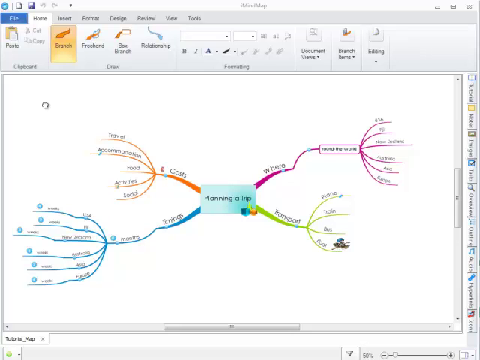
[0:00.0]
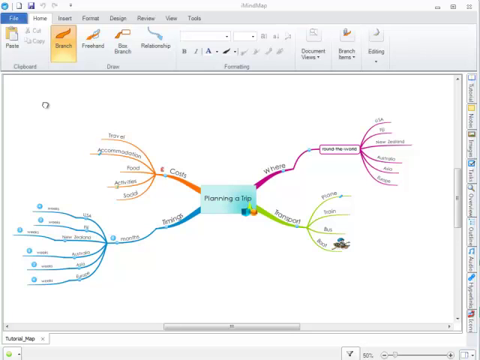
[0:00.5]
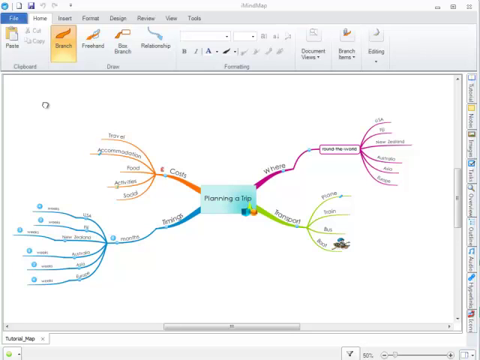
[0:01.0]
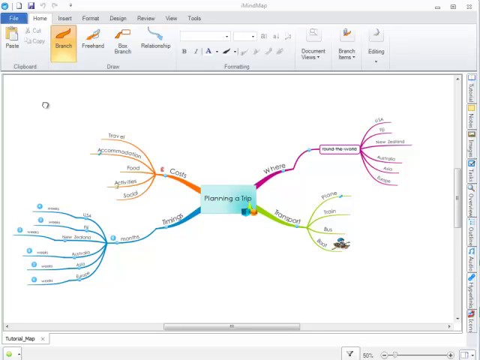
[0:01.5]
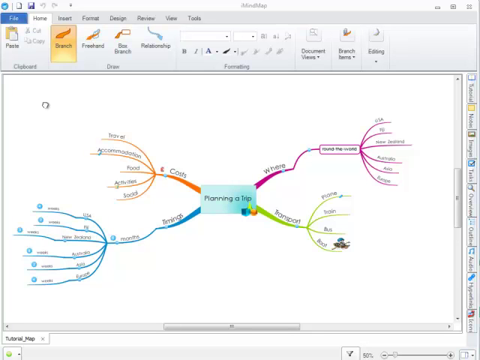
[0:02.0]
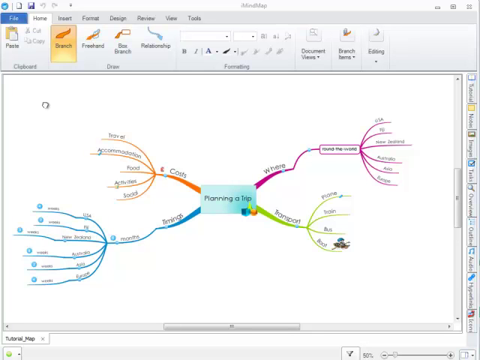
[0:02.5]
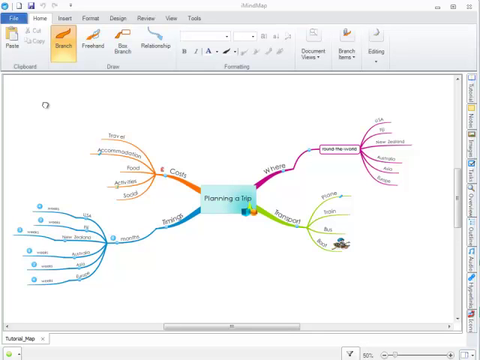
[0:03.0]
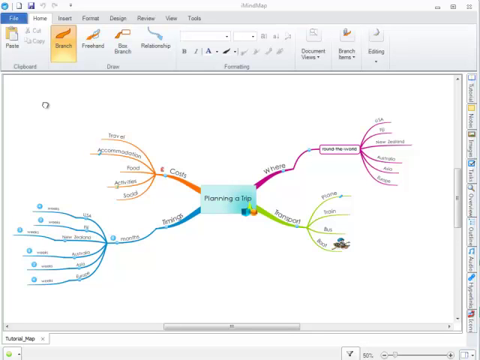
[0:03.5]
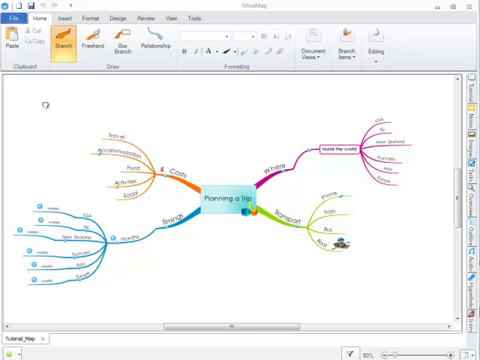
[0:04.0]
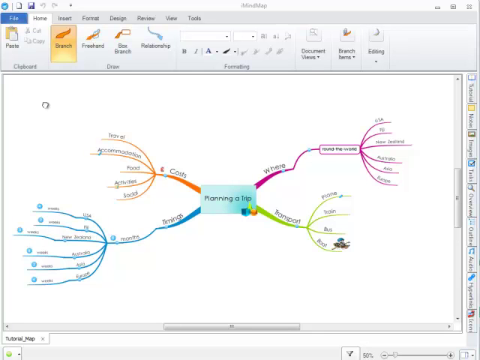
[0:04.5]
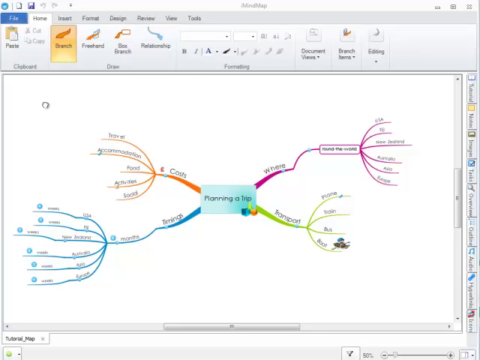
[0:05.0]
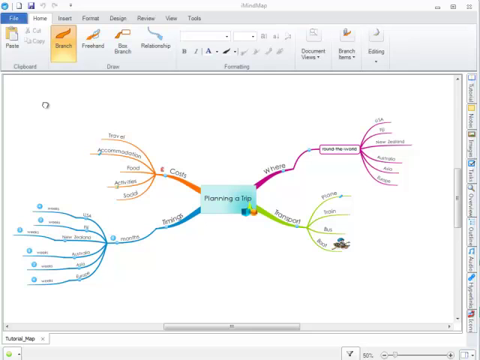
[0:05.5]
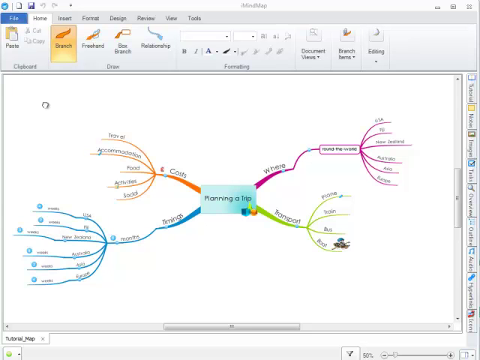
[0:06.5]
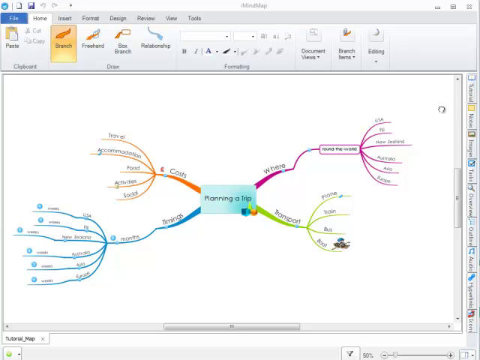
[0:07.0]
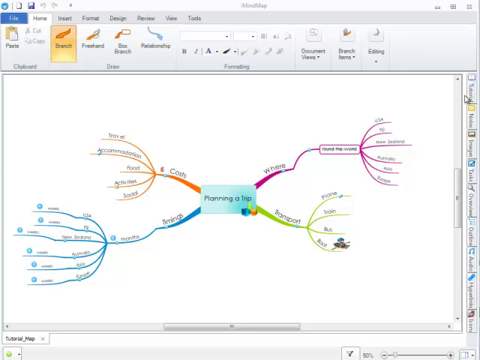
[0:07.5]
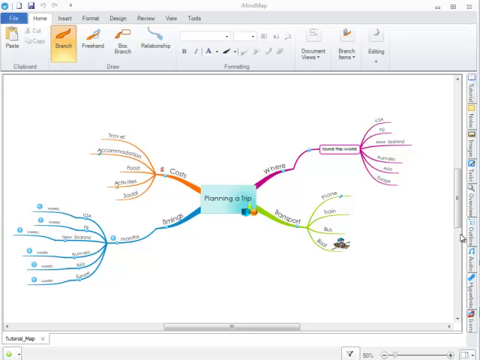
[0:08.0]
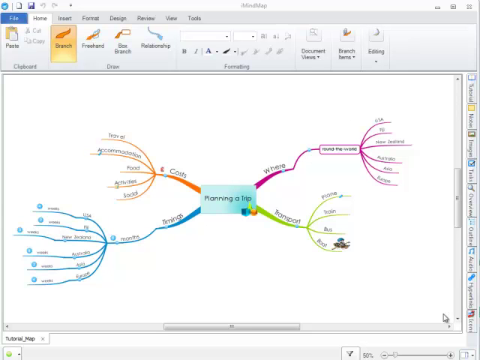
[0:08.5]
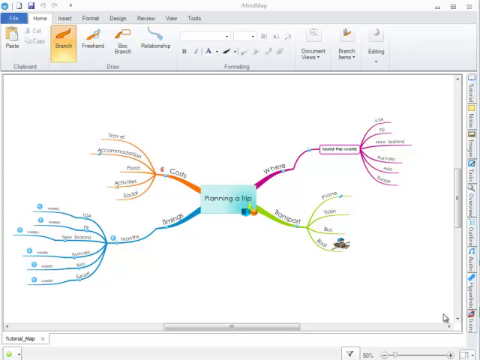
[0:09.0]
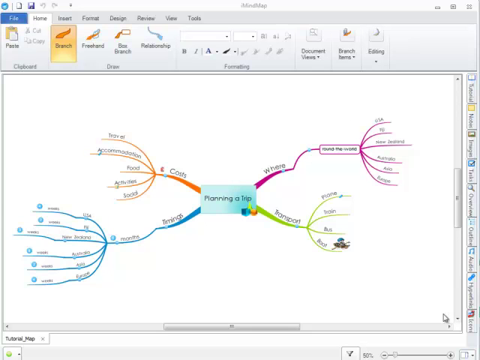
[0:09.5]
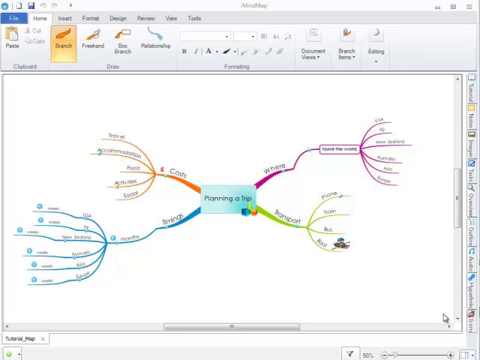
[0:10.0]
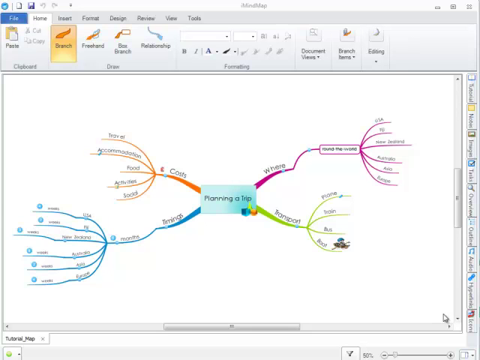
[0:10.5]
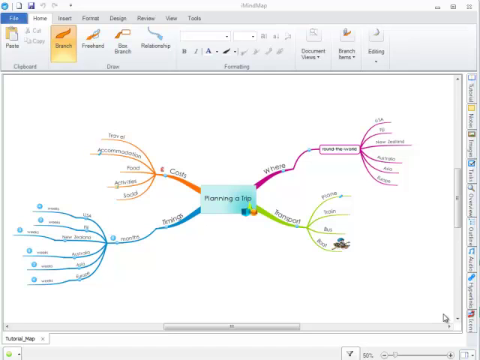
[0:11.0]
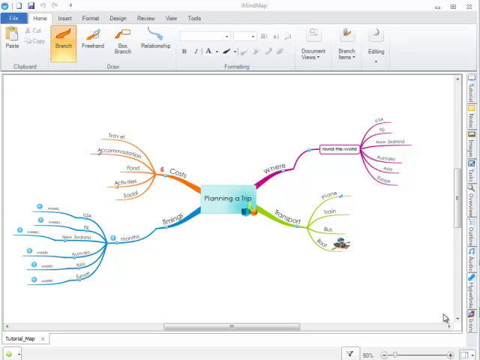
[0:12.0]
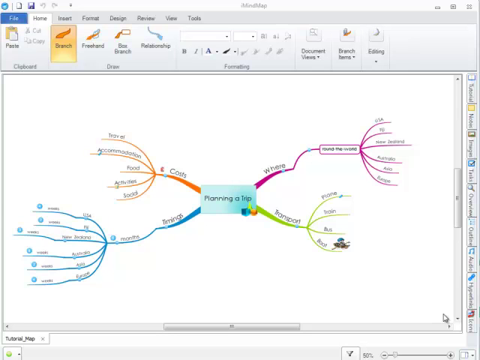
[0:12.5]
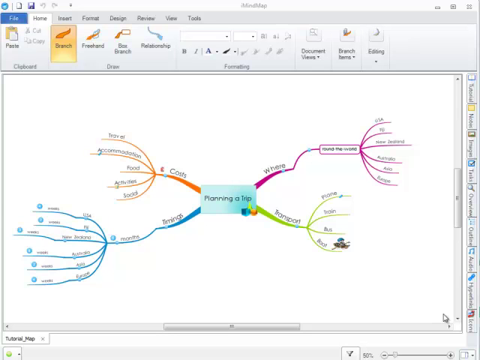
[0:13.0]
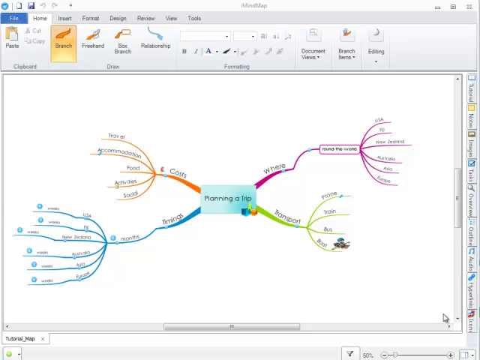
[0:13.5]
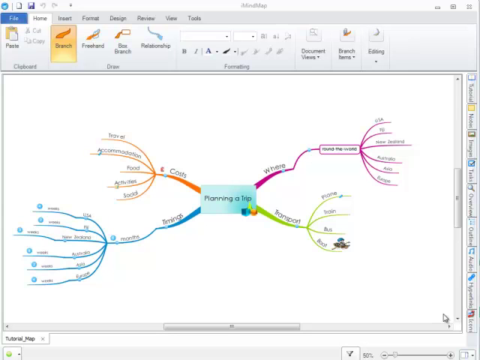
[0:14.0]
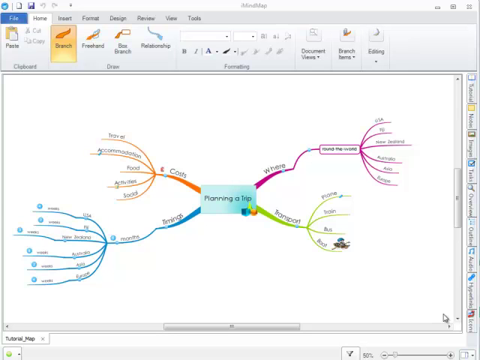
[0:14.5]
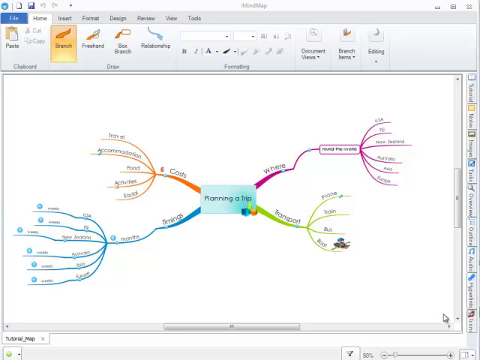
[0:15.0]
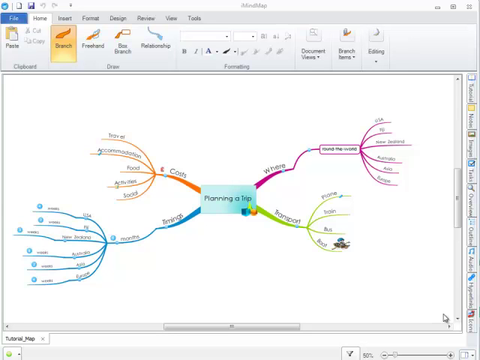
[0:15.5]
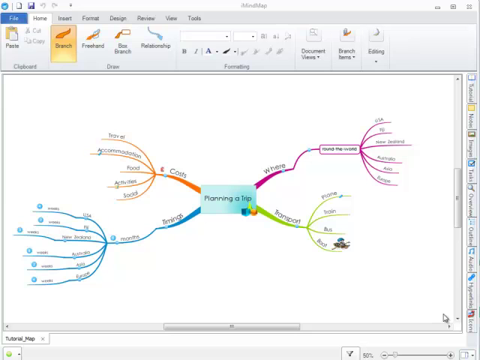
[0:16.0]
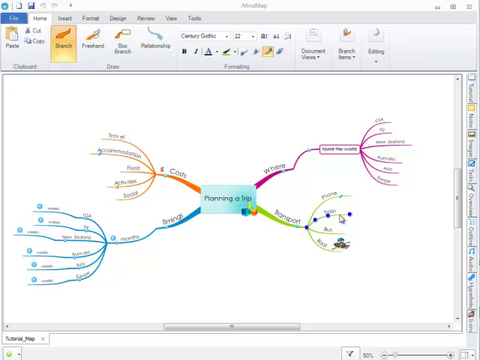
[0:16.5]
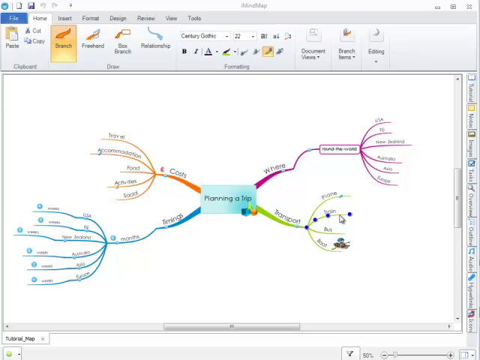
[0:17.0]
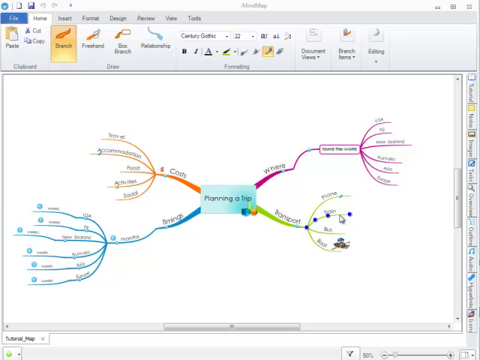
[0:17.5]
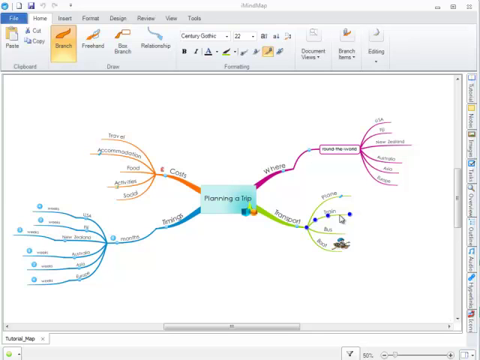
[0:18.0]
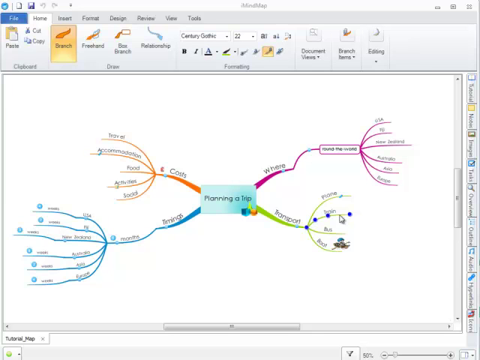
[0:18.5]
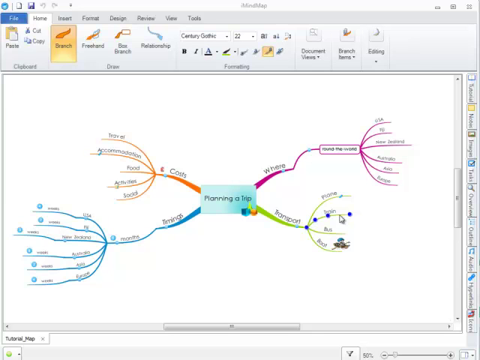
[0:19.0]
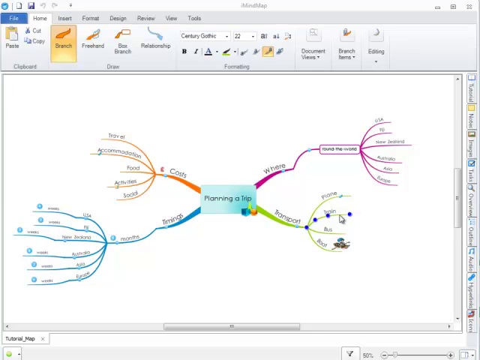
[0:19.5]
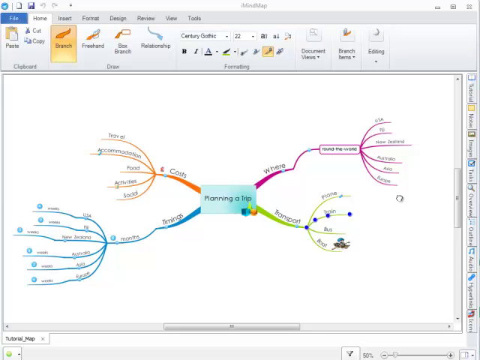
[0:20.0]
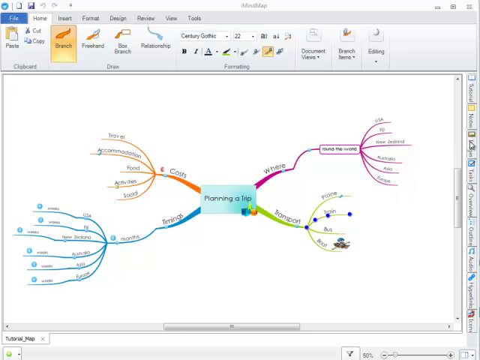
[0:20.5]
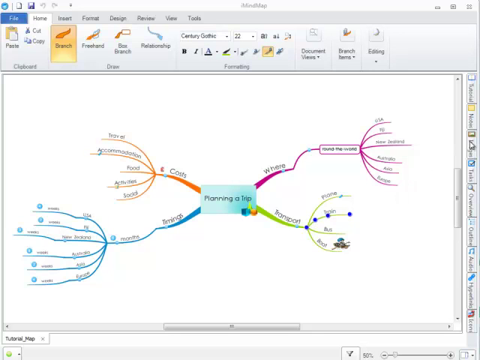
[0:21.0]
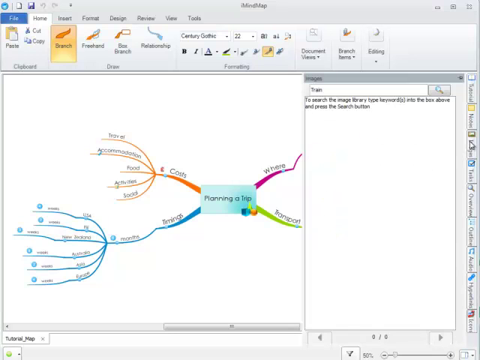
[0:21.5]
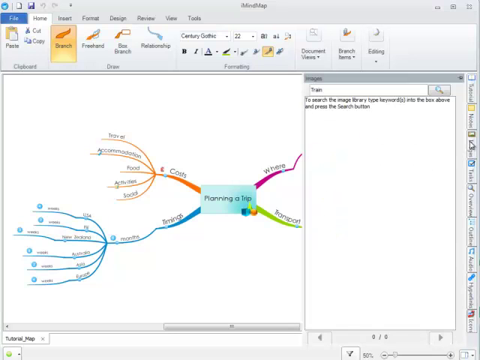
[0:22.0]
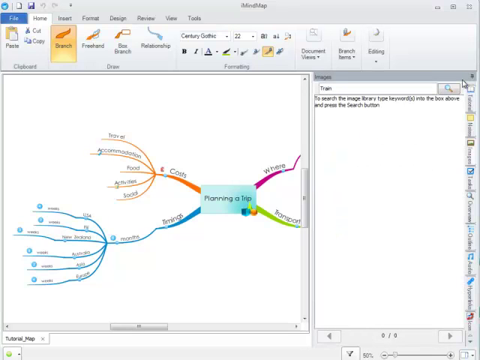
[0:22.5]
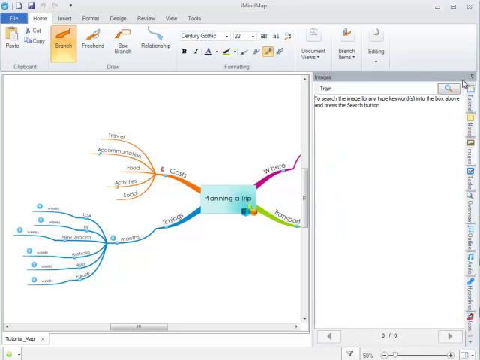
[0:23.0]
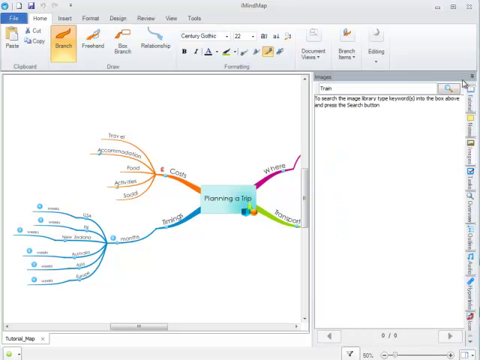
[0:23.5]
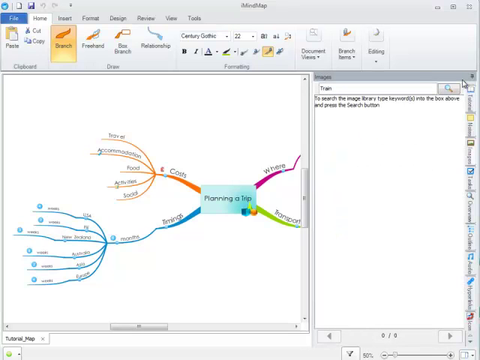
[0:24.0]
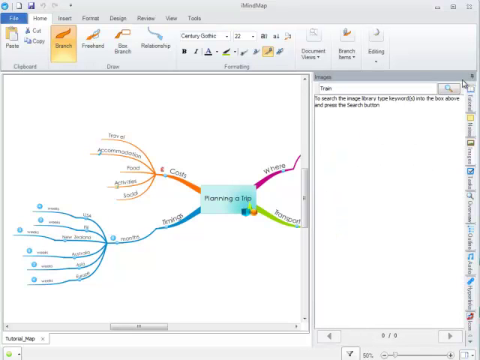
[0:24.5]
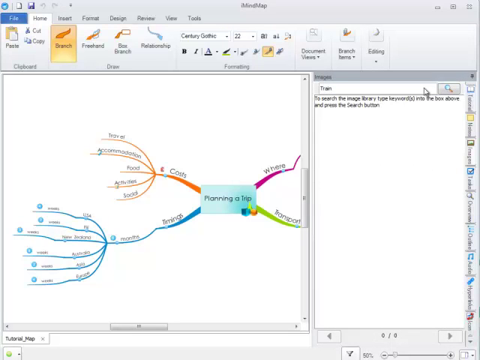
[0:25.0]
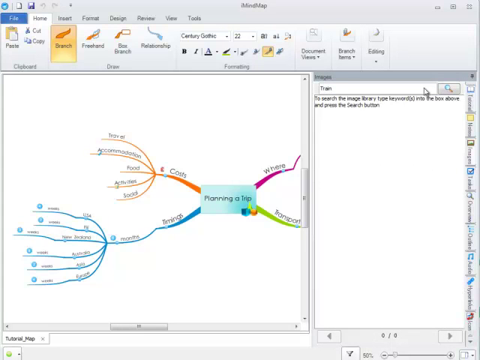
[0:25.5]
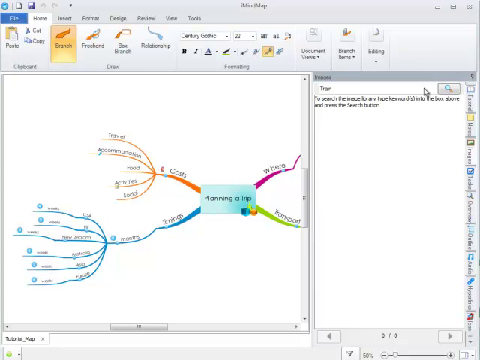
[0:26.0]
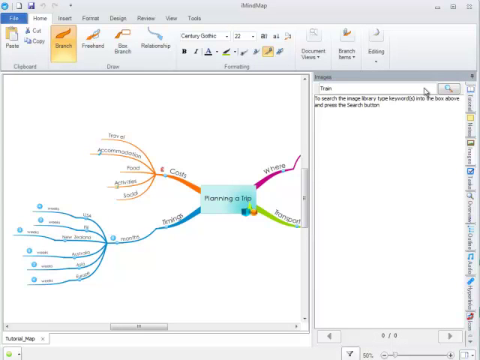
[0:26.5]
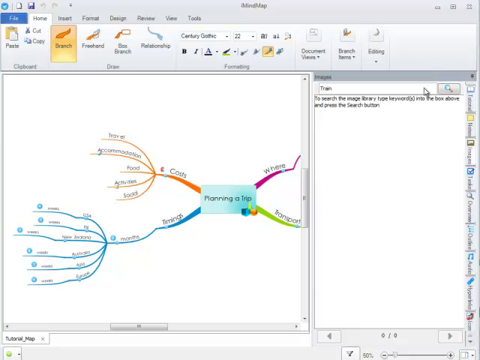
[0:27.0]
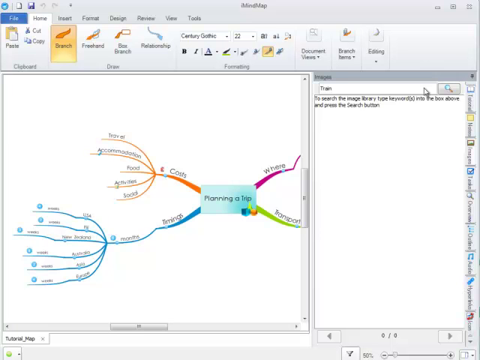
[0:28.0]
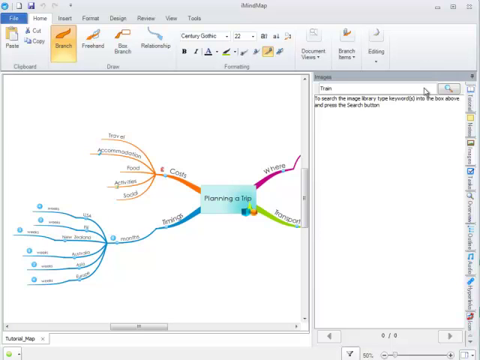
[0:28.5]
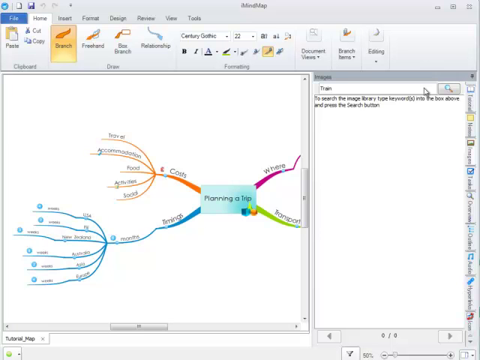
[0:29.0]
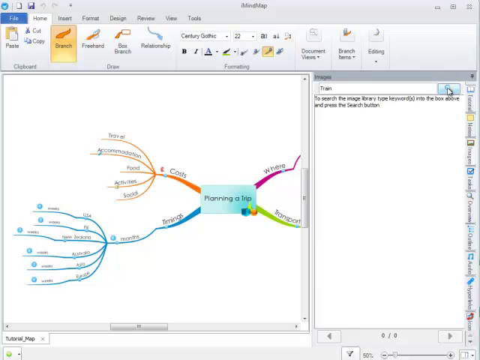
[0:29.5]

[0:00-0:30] A diagram that seems to have been drawn in a design app is on screen. The app shows options such as paste, cut, copy and draw. The diagram is about planning a trip and is divided into four branches, each a different colour: purple, lime green, blue and orange. Each branch represents a different function of the trip planning. The purple branch shows where the venue is, the orange shows the costs, and the blue shows another option. The four branches are further subdivided: the purple one has six subsections, the green one four, the blue one six and the orange one five. The cursor moves to the sidebar on the right and points to an option, which brings up a search bar.